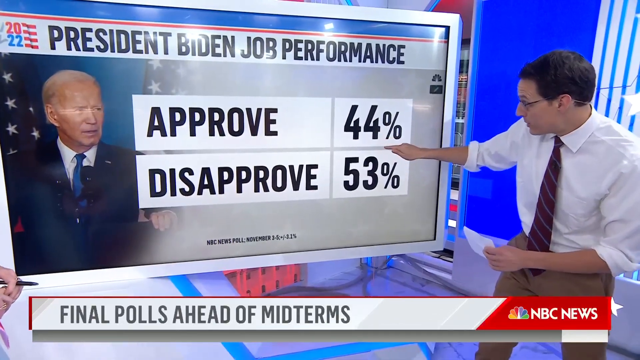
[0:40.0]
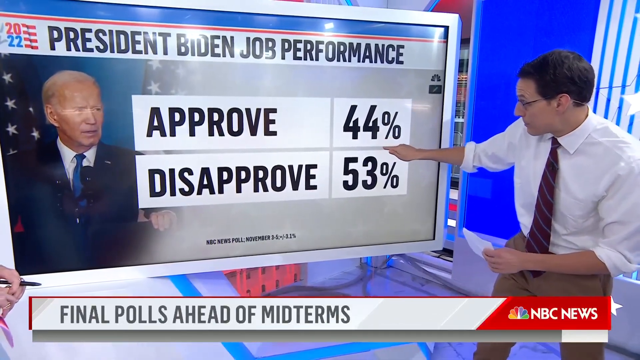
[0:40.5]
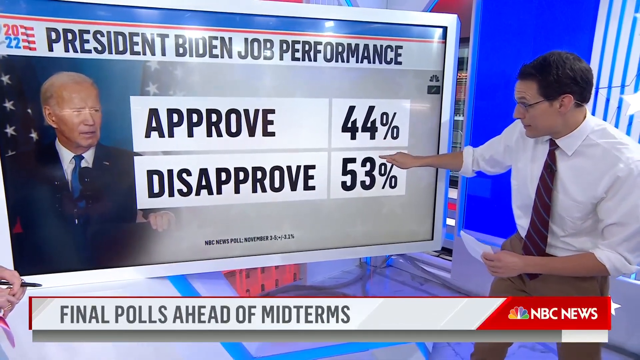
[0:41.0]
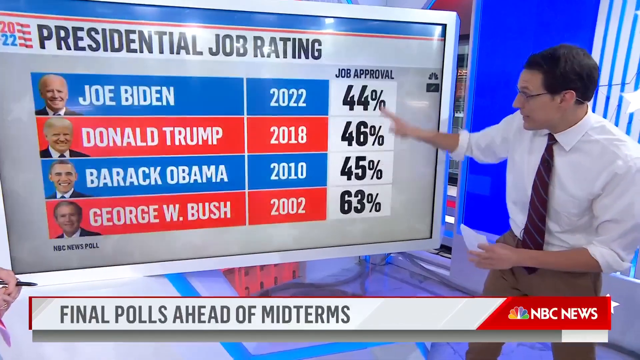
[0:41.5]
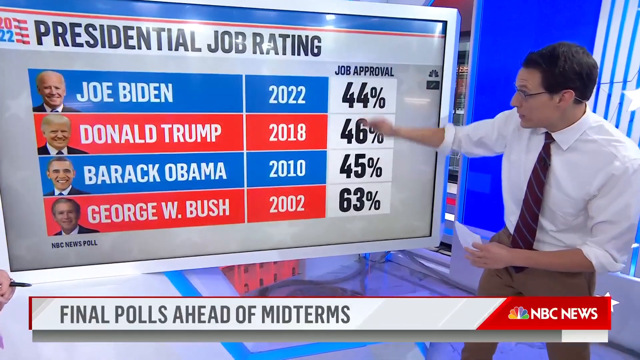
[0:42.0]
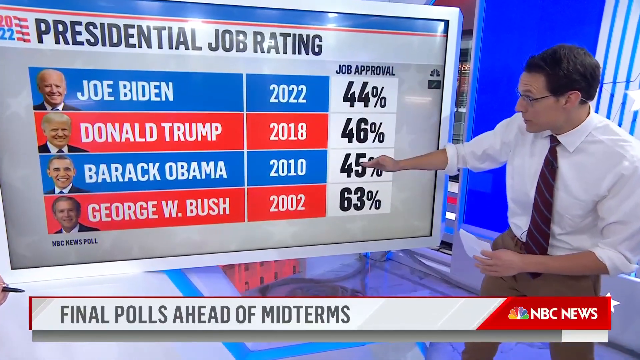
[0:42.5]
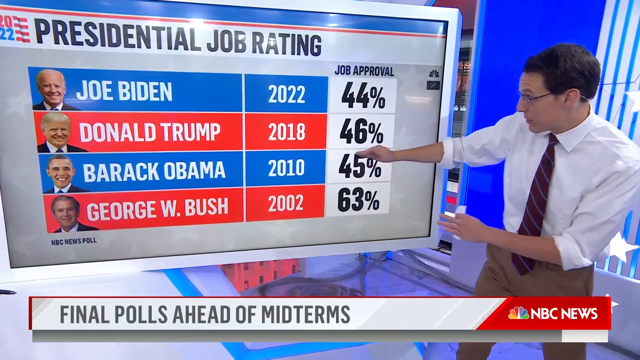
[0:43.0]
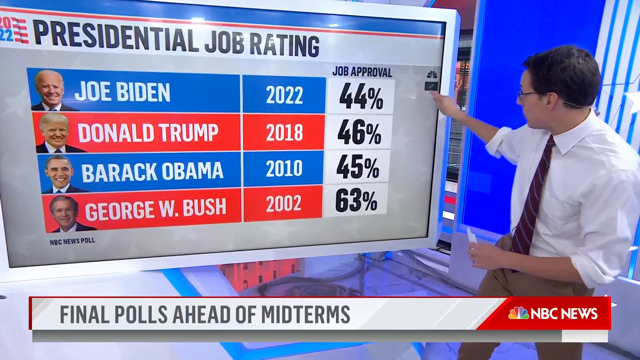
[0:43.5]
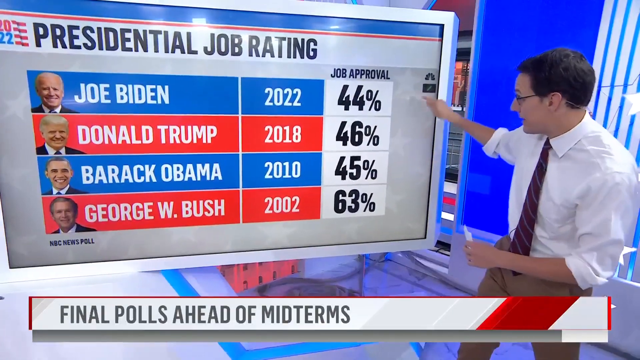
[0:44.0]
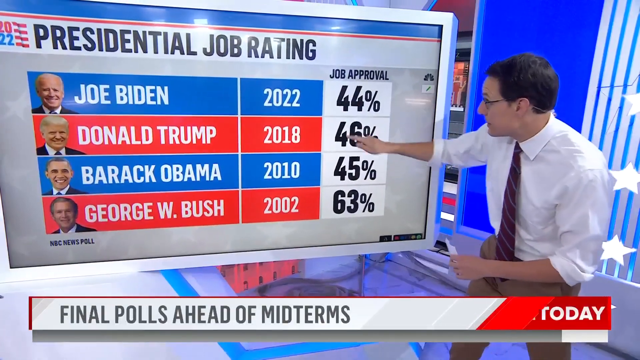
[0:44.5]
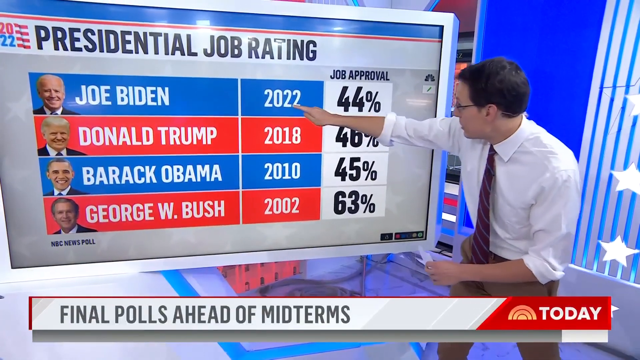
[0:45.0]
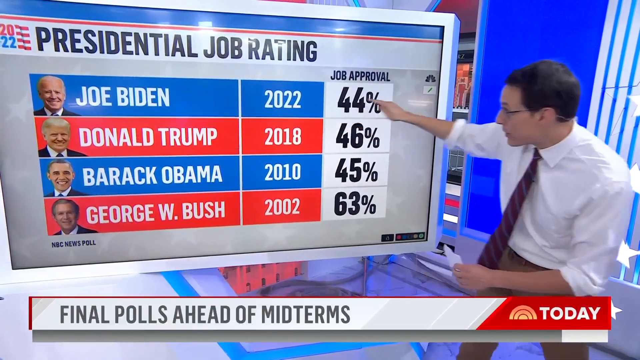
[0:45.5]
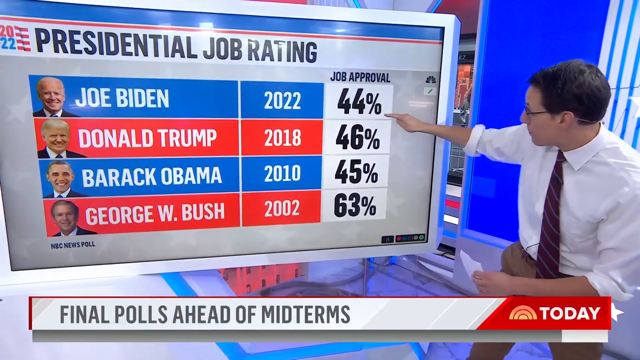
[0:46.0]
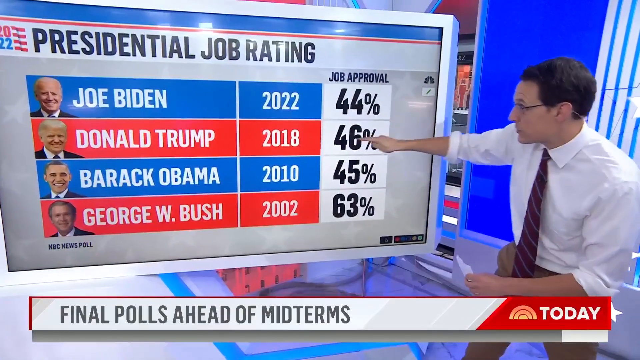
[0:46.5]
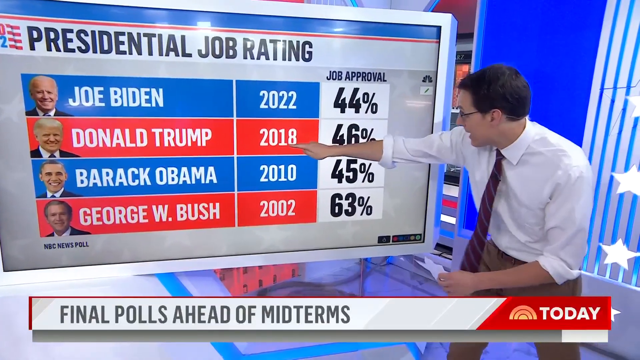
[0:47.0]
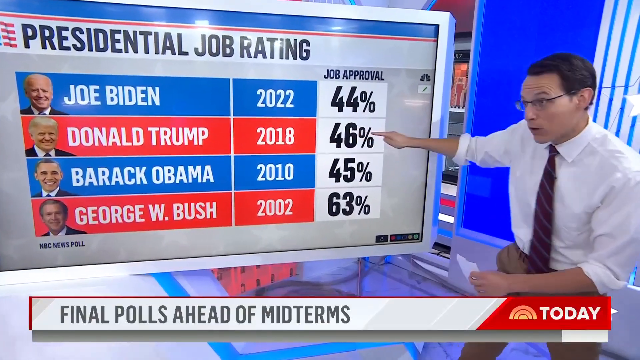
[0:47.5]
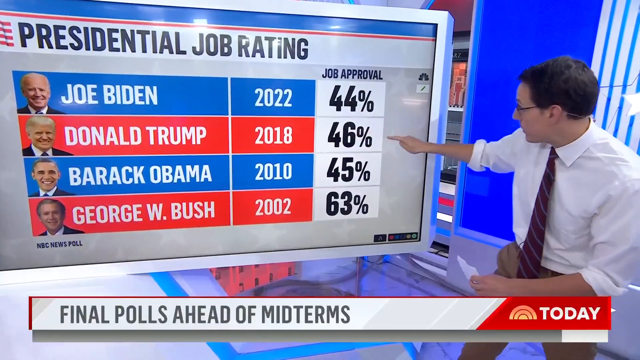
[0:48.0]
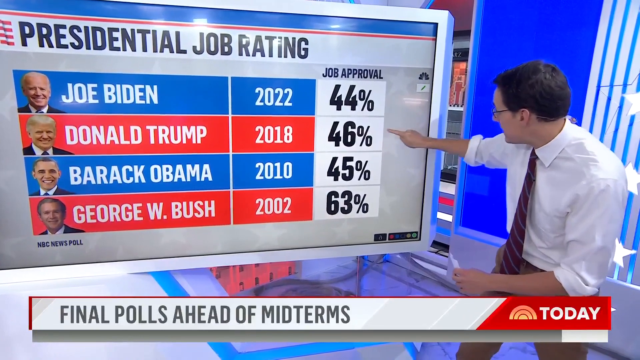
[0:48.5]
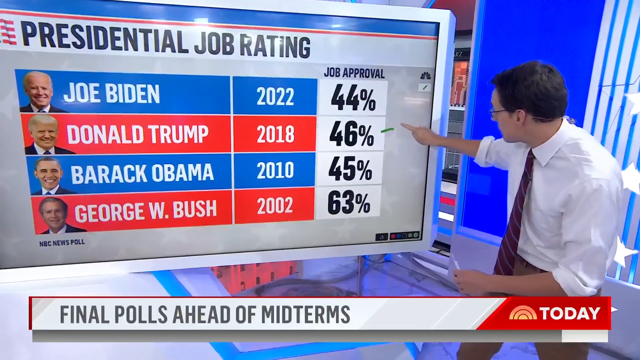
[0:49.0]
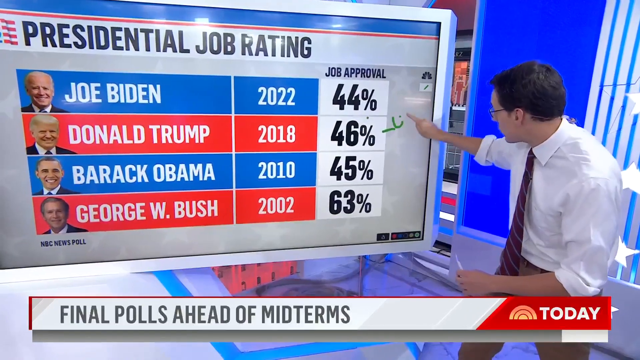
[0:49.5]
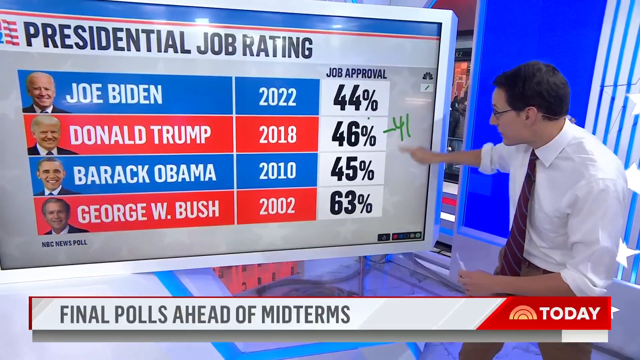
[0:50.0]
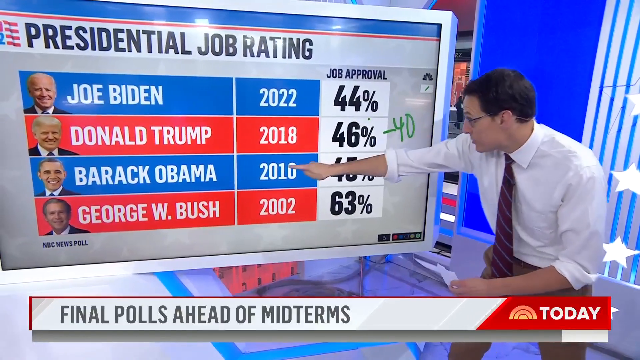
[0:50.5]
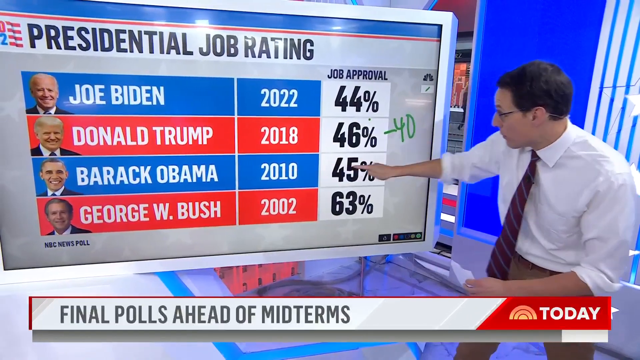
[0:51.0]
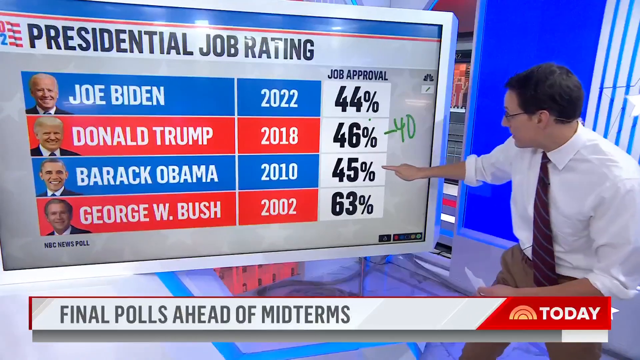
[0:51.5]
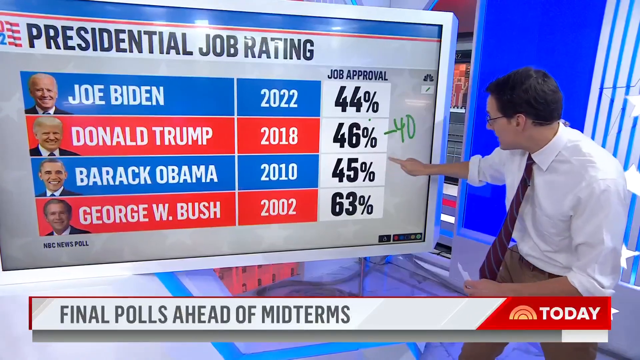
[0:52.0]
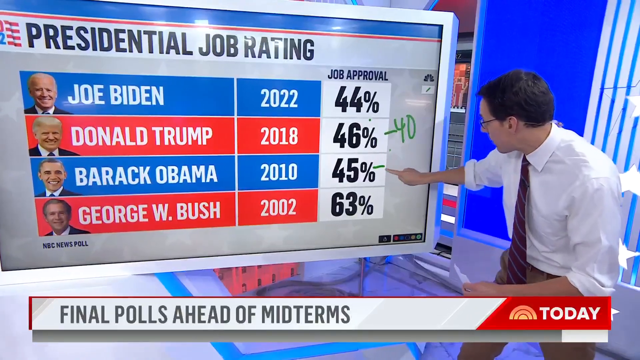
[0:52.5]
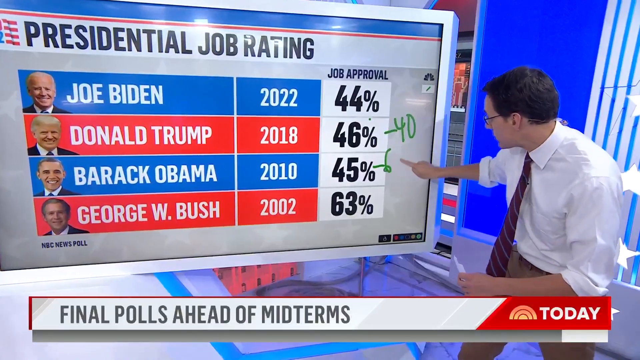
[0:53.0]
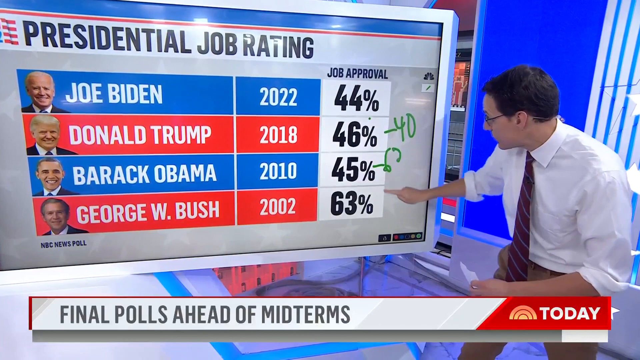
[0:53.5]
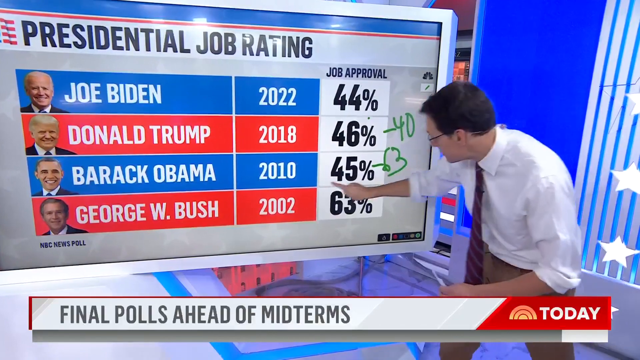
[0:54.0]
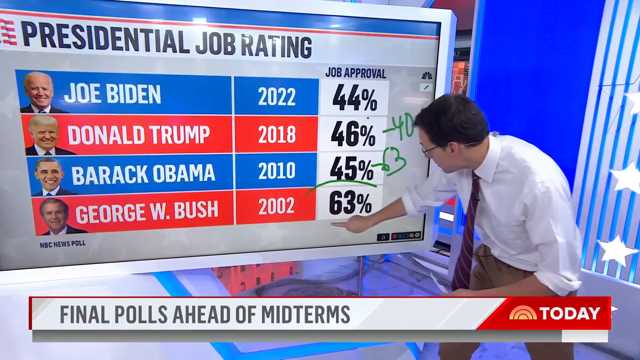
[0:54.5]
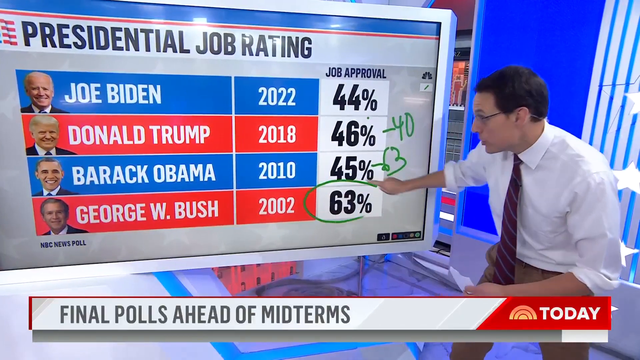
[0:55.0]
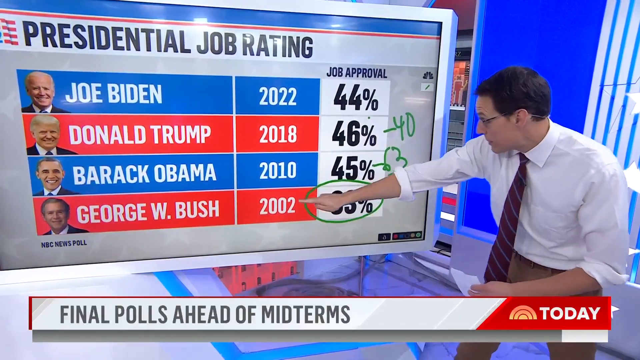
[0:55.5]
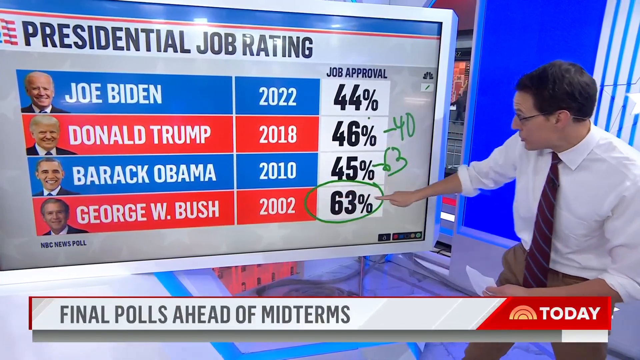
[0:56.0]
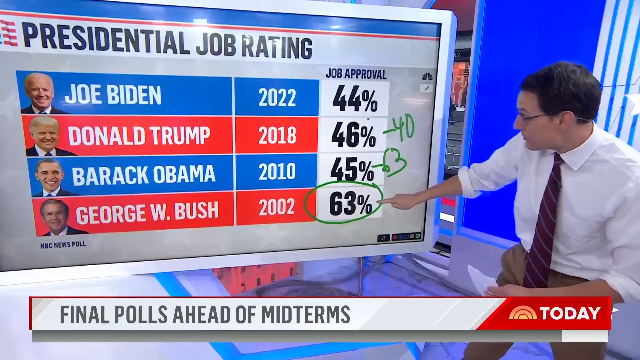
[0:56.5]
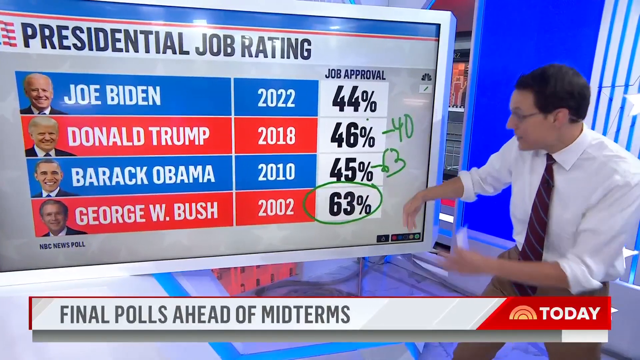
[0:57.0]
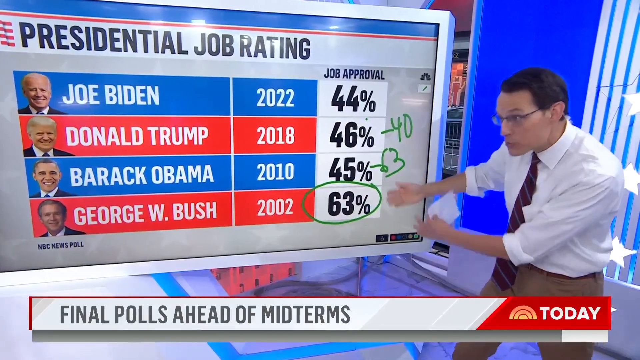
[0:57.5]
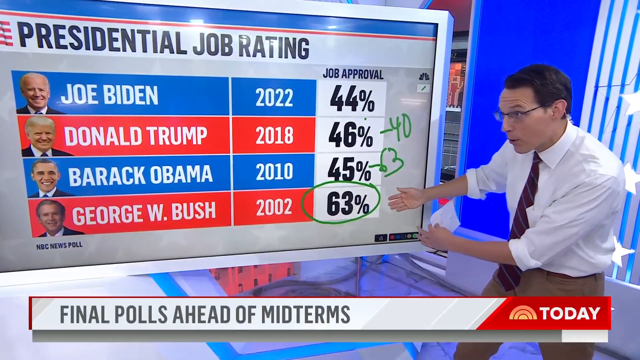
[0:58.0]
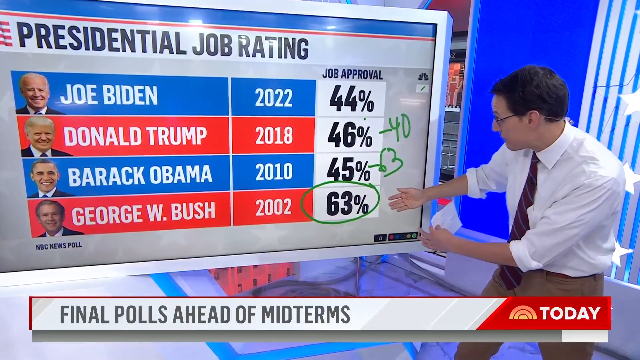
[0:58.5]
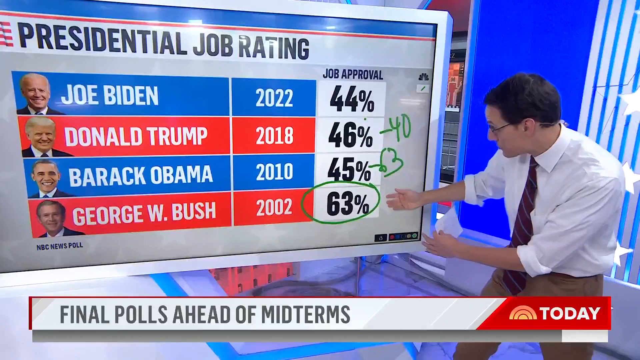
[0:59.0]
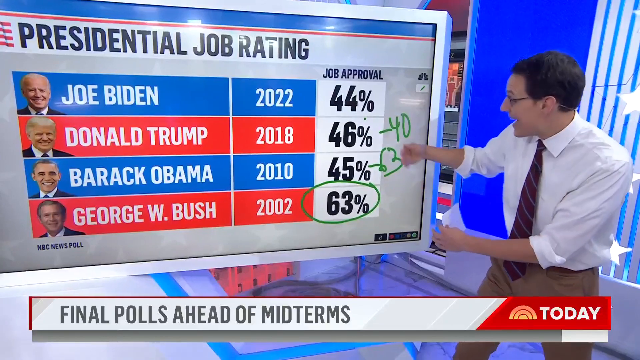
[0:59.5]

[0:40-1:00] A screen of presidential job ratings lists Joe Biden, 2022, job approval 44%; Donald Trump, 2018, 46%; Barack Obama, 2010, 45%; and George W. Bush, 2002, 63%. The man points at the screen as he talks. He then writes on the screen, putting 40% beside Donald Trump and 63% beside Barack Obama, and gestures toward George W. Bush's 63%. The video is very clear, with no grainy sections.